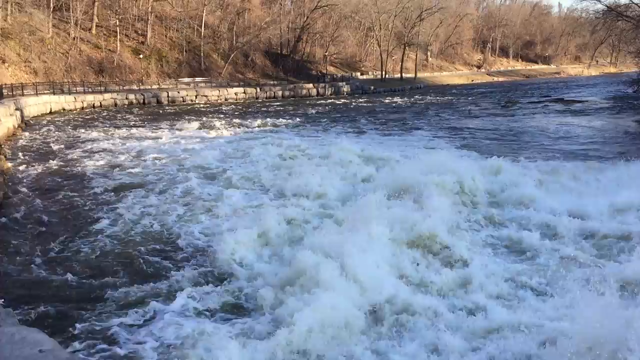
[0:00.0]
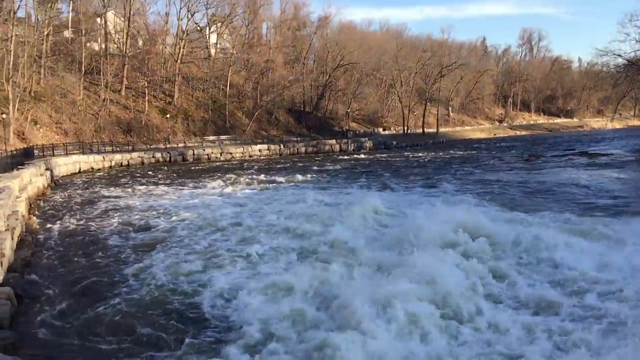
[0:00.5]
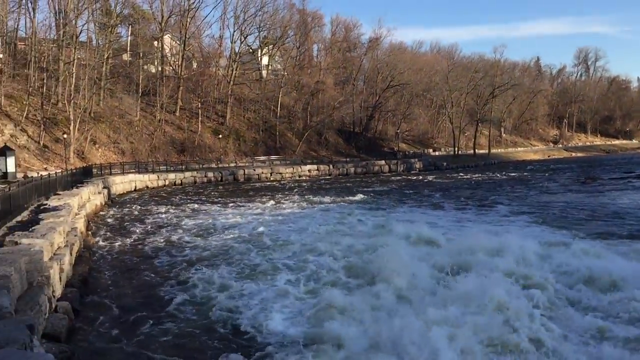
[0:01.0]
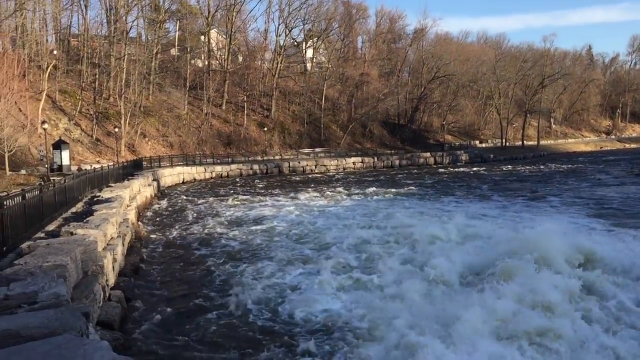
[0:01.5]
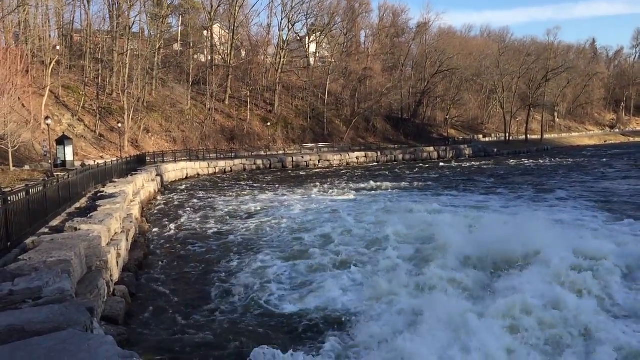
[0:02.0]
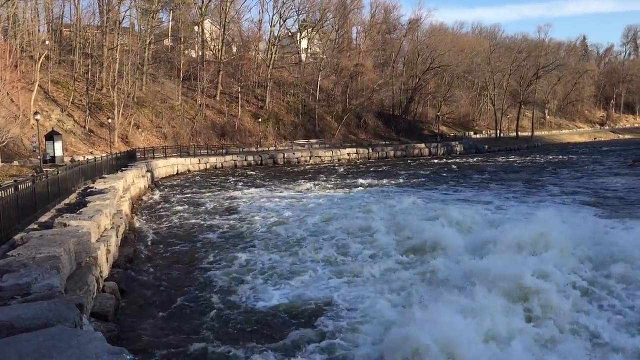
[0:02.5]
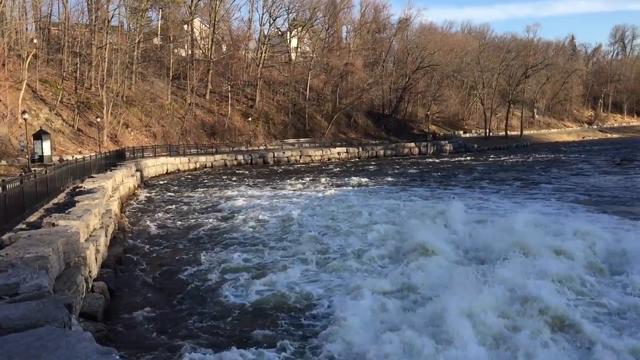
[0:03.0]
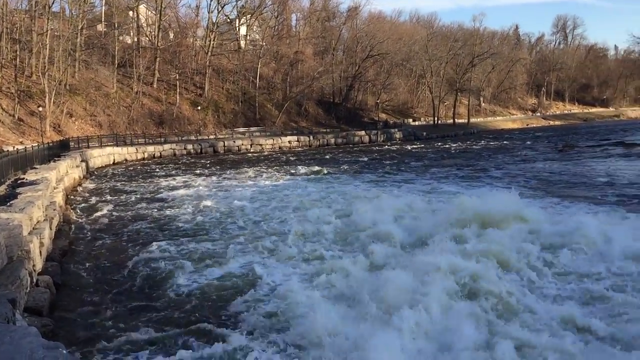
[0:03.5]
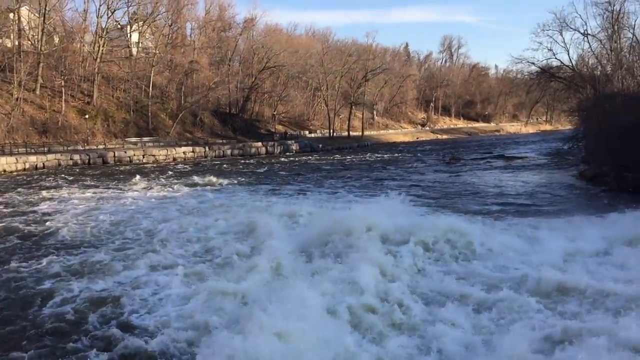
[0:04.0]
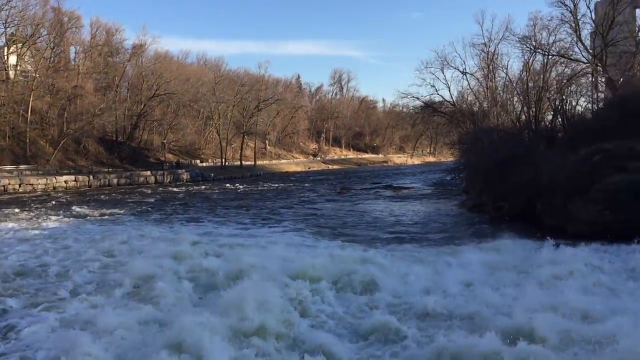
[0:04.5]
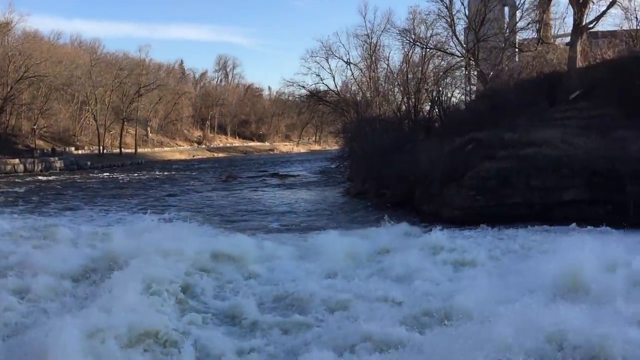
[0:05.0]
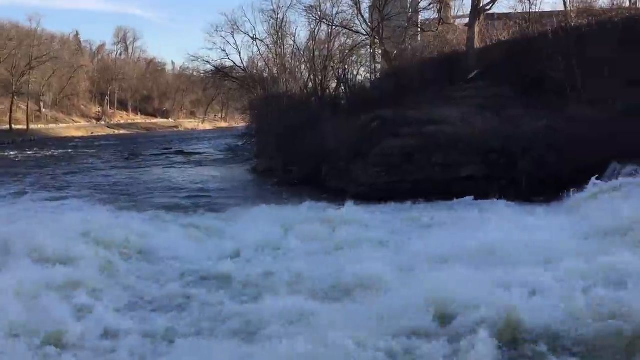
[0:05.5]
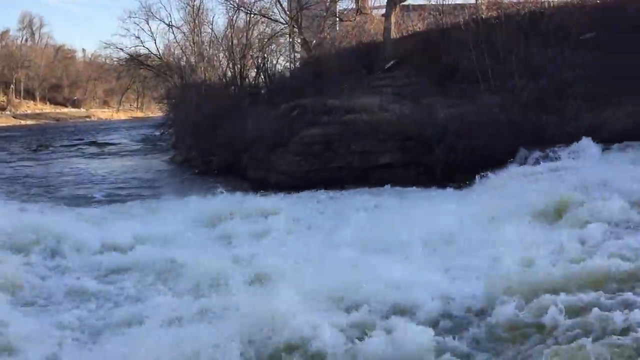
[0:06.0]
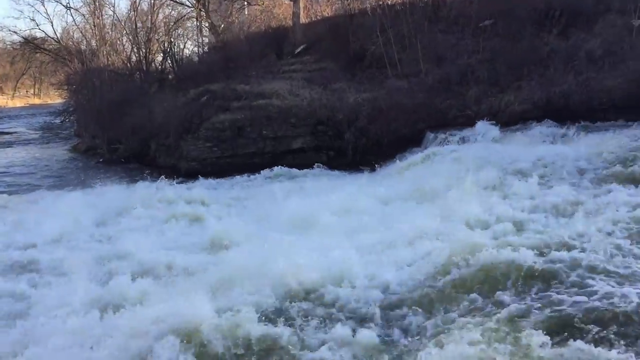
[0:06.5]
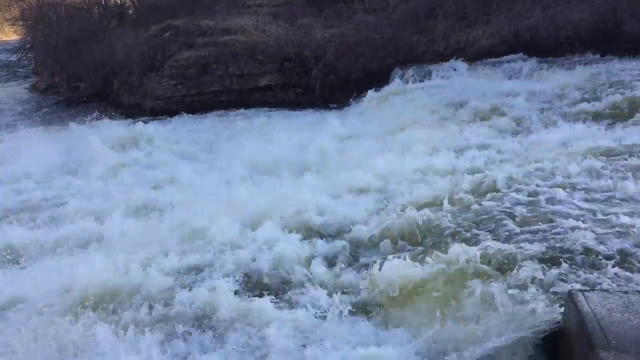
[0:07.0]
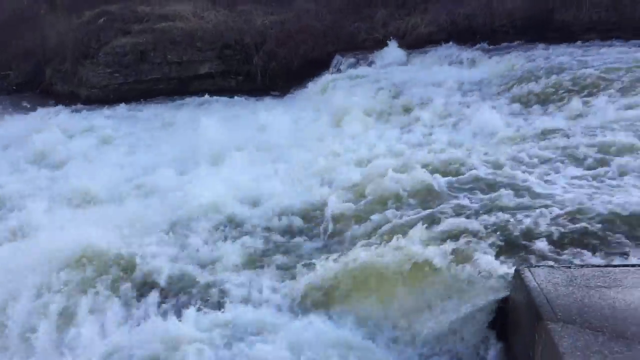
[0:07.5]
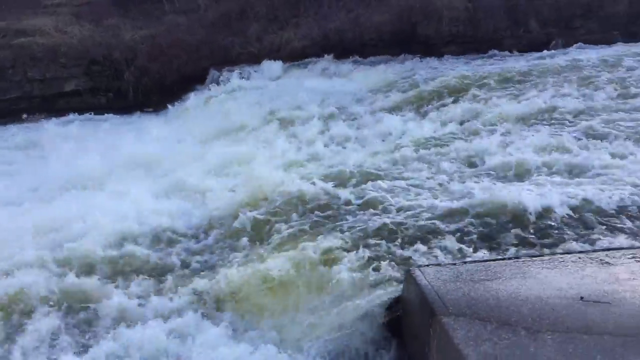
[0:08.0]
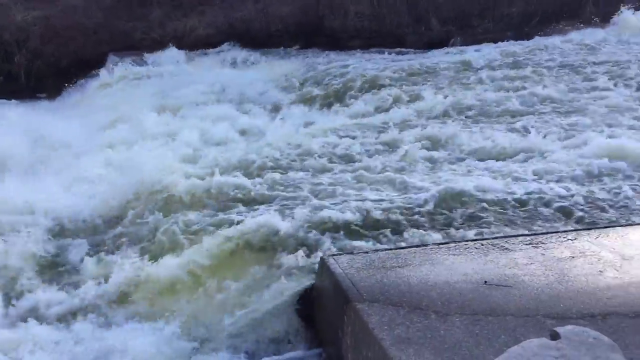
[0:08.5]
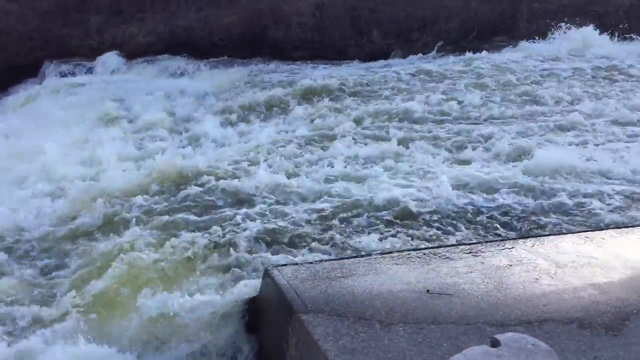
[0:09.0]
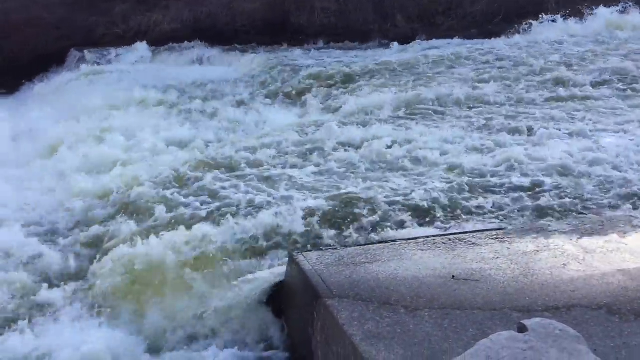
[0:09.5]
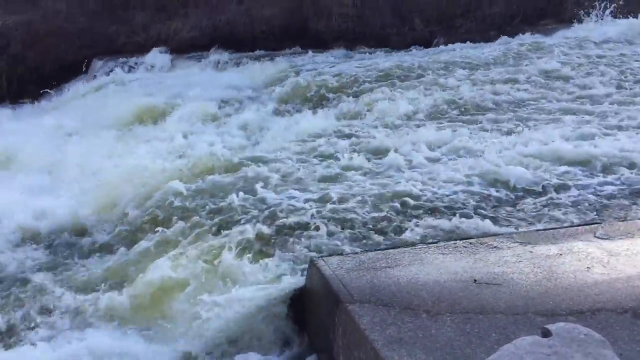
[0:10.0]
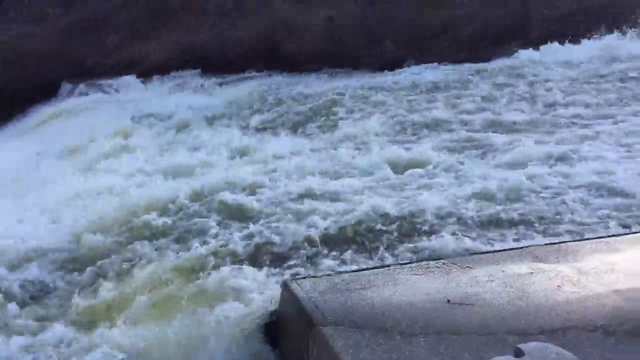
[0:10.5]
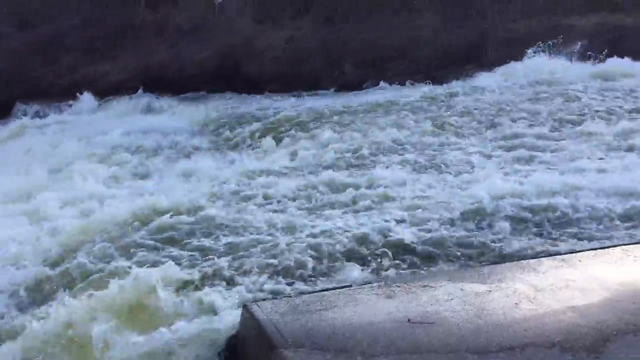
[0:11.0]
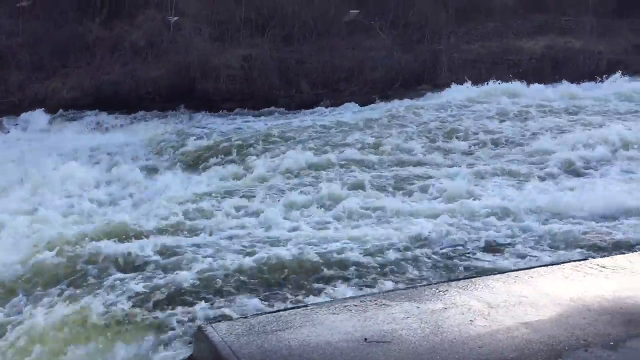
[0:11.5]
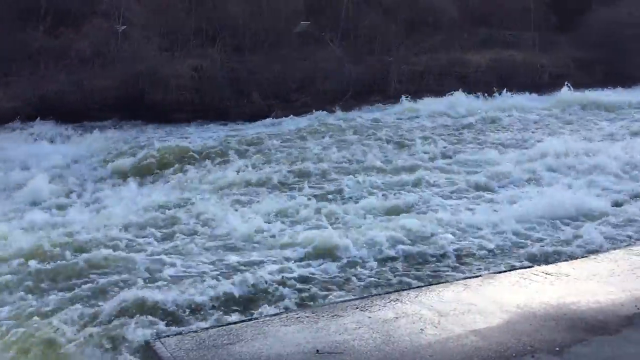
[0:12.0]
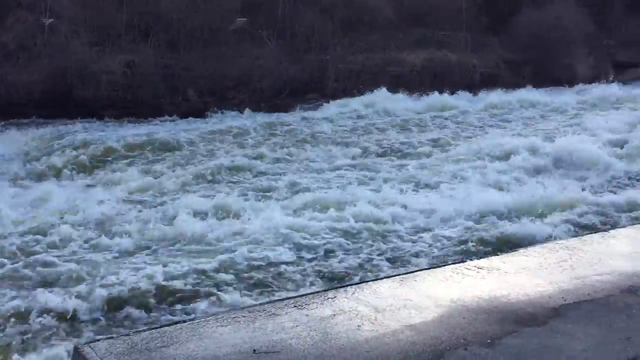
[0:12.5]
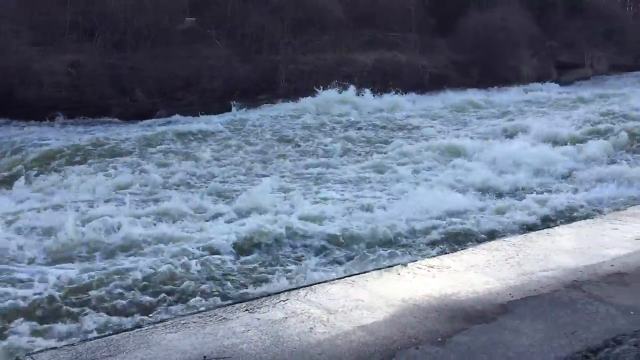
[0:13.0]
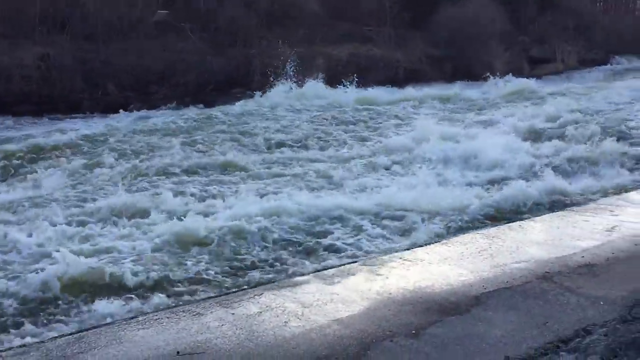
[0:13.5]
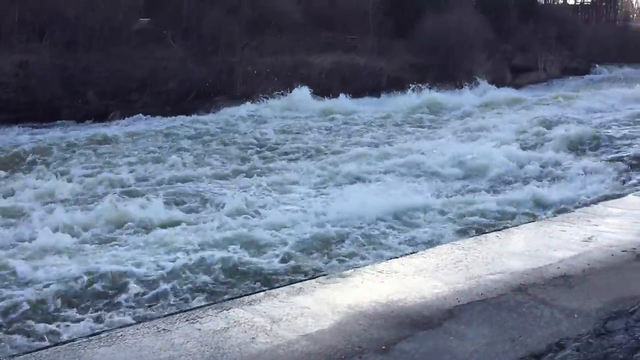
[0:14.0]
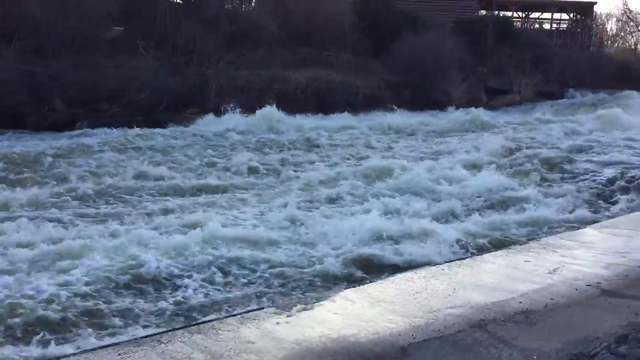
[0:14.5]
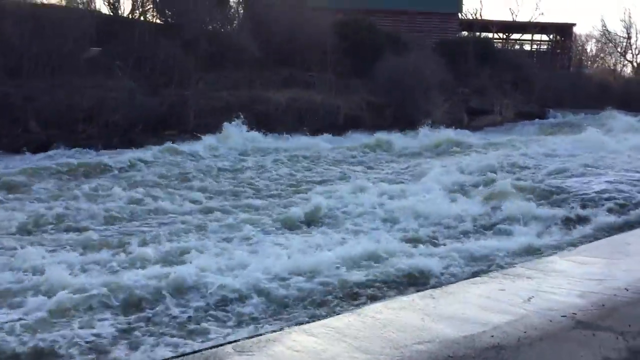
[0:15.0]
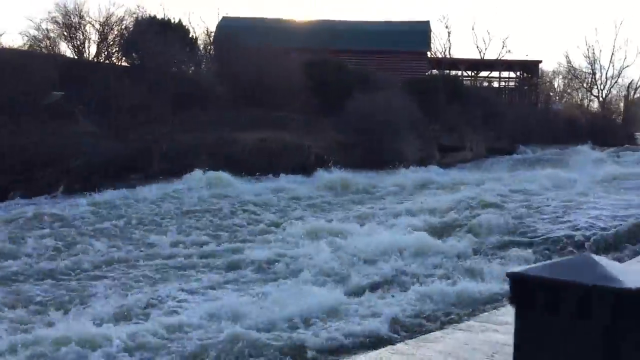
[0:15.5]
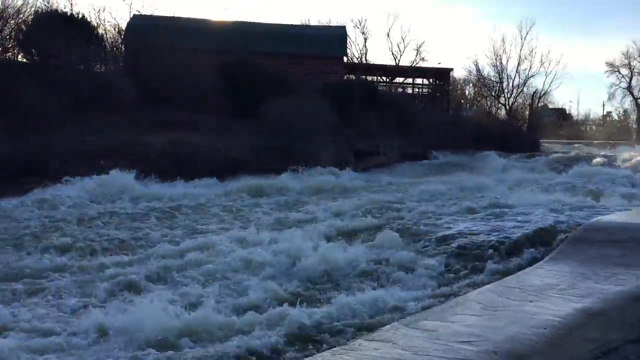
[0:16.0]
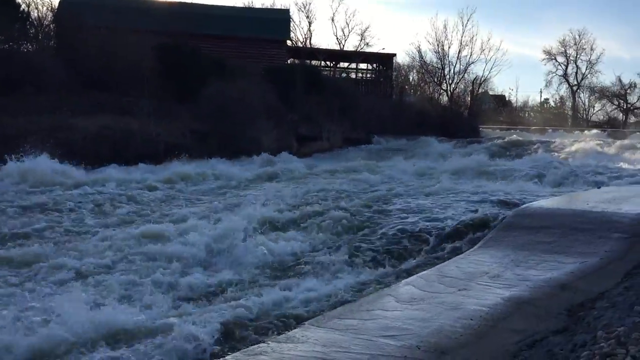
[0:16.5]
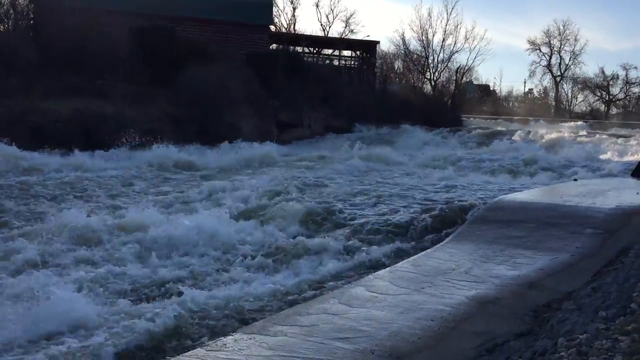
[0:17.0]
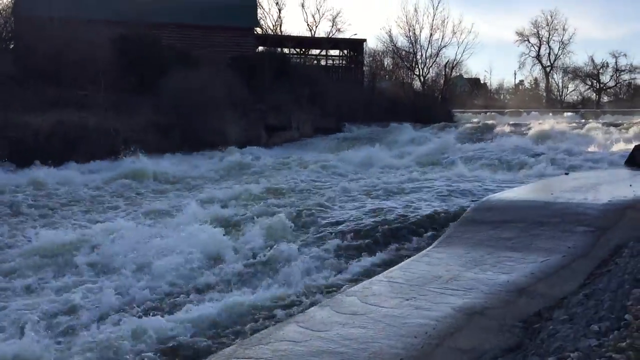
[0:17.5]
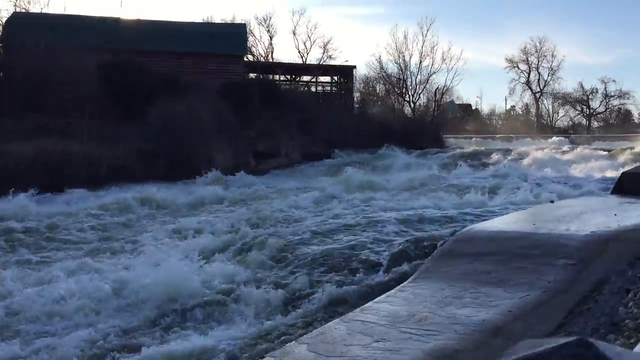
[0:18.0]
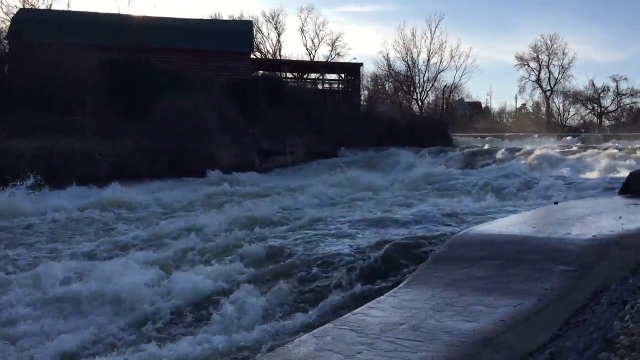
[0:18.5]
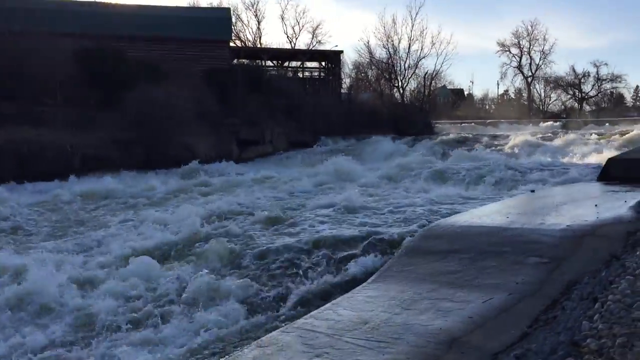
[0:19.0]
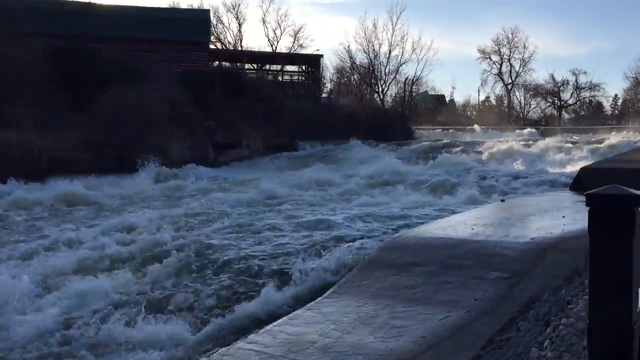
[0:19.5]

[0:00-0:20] A large river or body of water appears to have a strong current or waterfall, with lots of aerated water and waves forming. The person filming pans to the right, revealing what seems to be a waterfall with lots of rocks underneath it. The water flows very briskly. On the other side of the water there seems to be a small, dense wooded area, and there also seems to be a barn or other type of building across the river. On the side where the person is standing, a stone fence separates the water from the road. Further down there is what looks like structural elements that control the water, or maybe a bridge. The water looks a bit cold, and the trees have no leaves on them. The sun shines behind the building, making the video look dark.